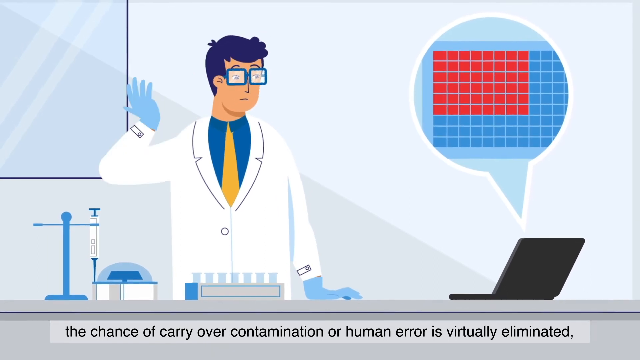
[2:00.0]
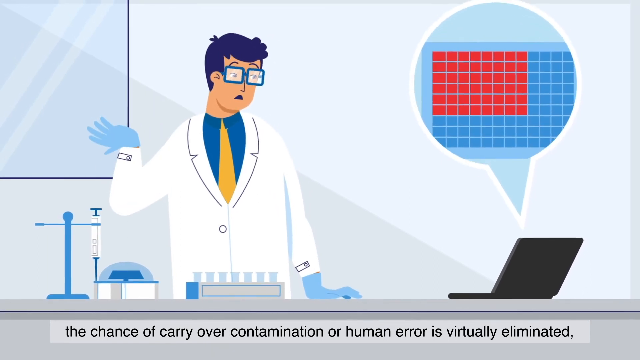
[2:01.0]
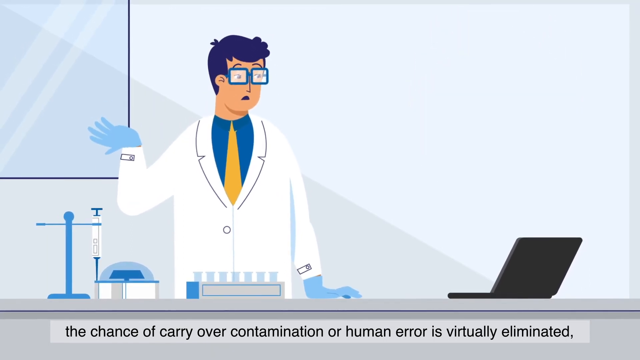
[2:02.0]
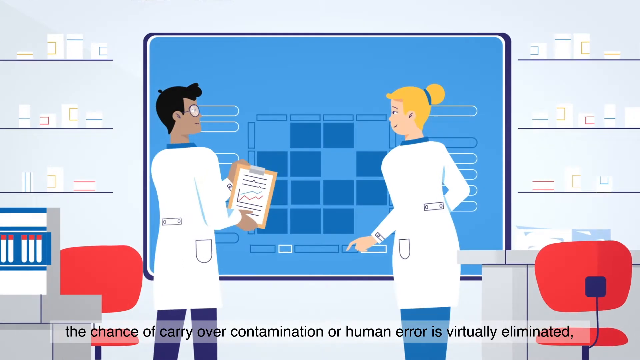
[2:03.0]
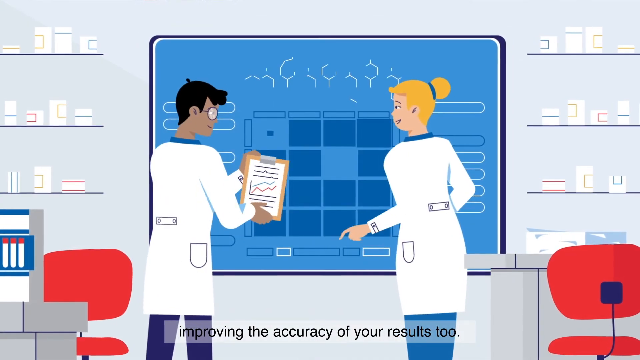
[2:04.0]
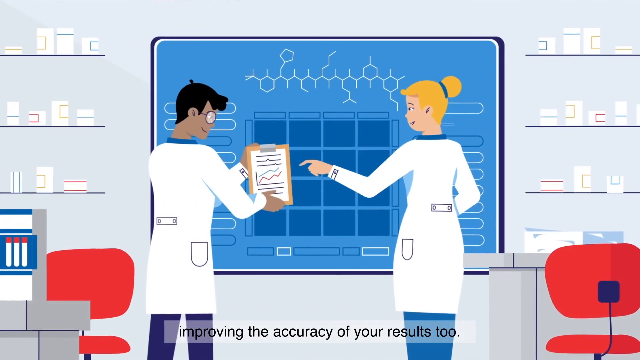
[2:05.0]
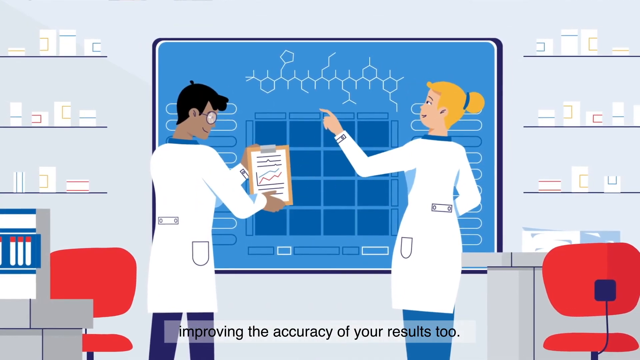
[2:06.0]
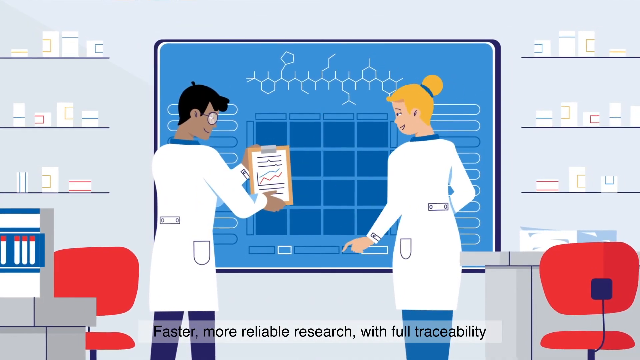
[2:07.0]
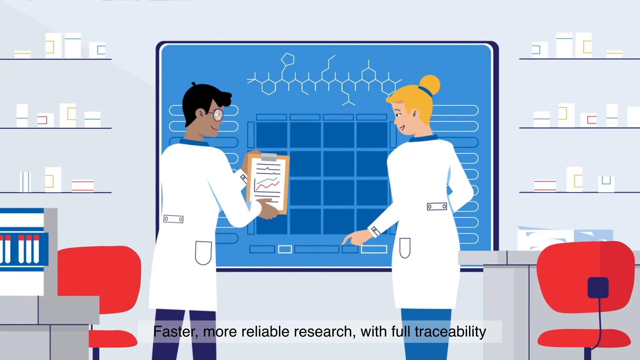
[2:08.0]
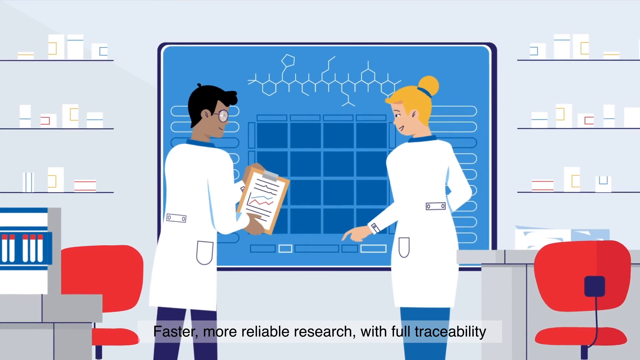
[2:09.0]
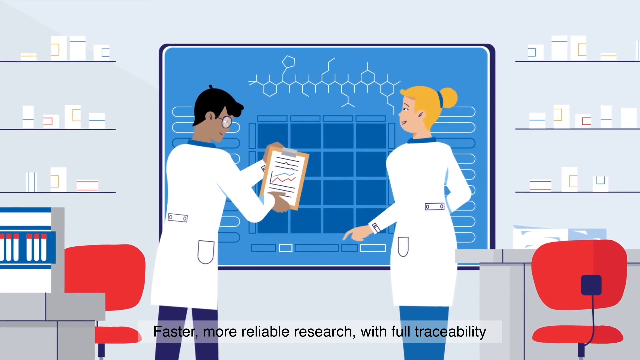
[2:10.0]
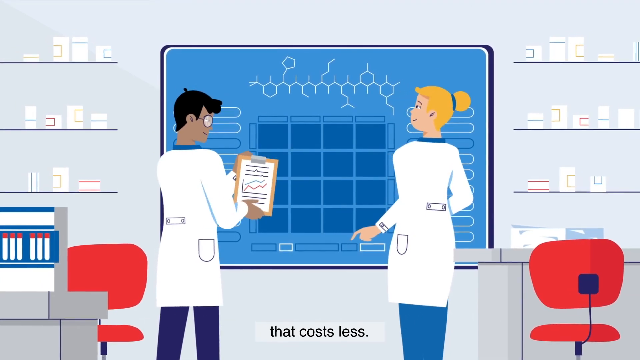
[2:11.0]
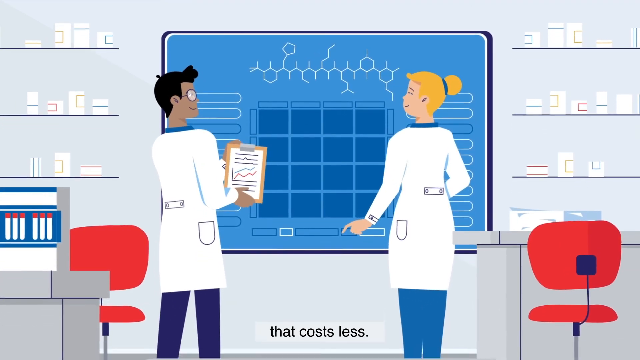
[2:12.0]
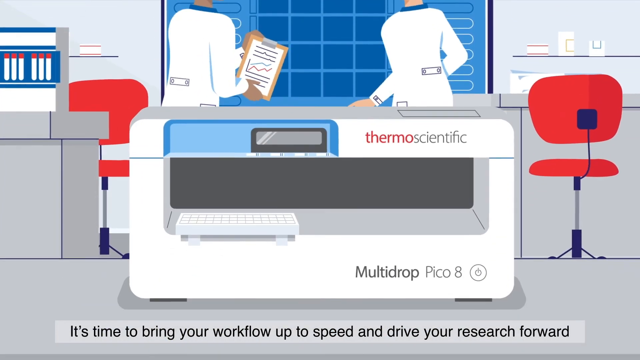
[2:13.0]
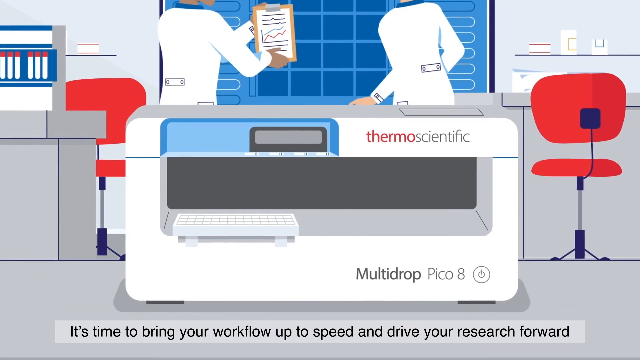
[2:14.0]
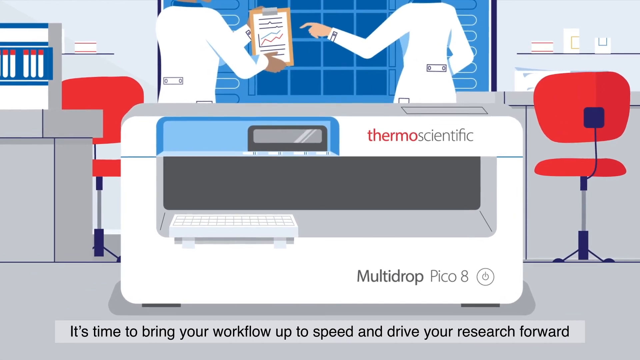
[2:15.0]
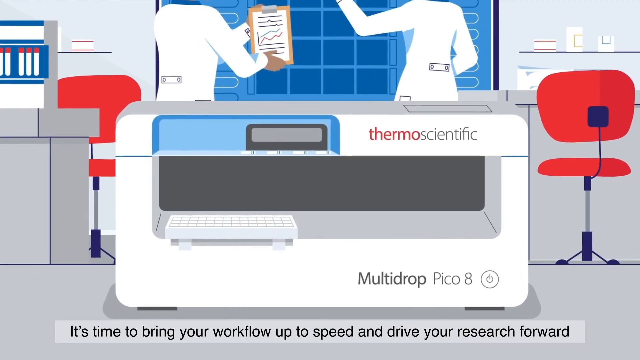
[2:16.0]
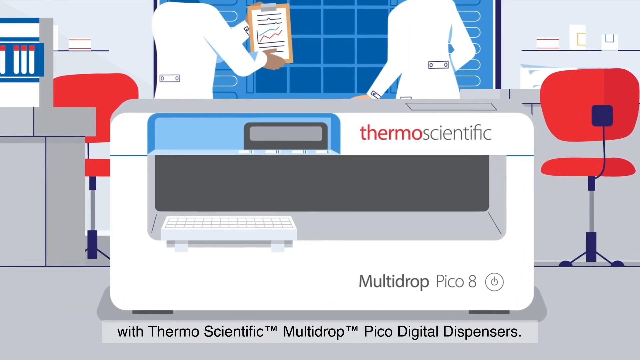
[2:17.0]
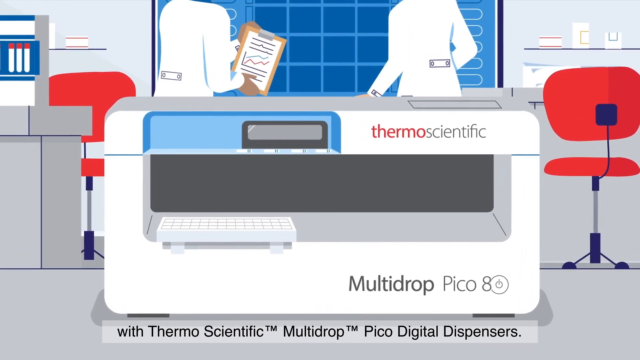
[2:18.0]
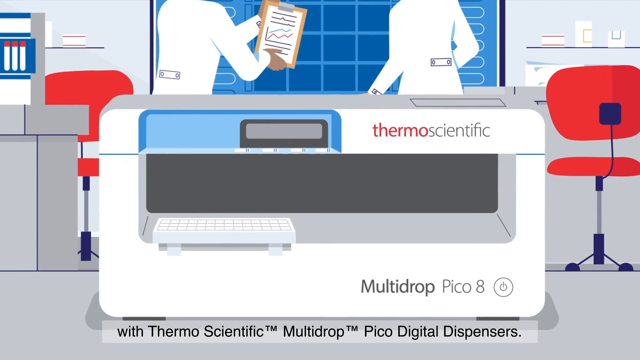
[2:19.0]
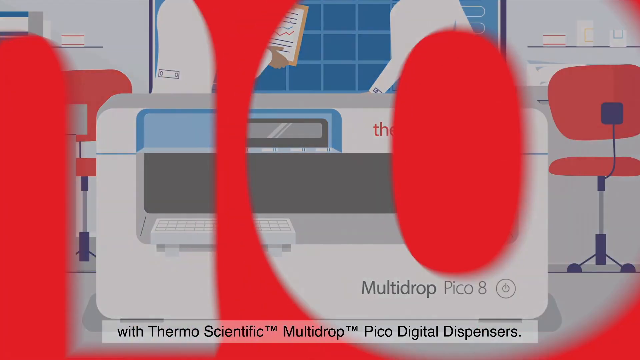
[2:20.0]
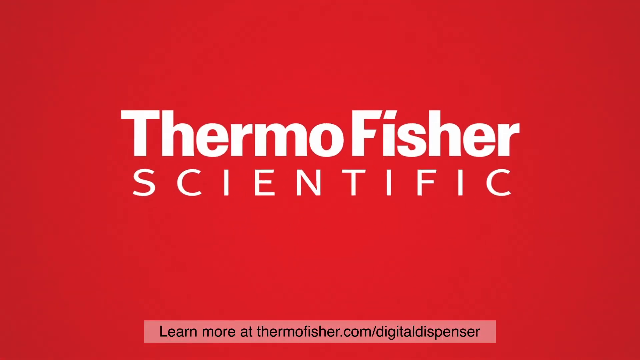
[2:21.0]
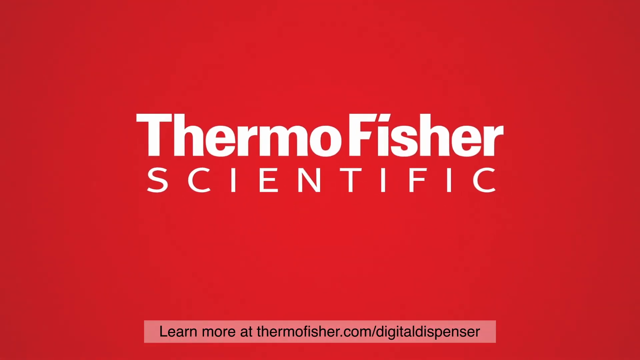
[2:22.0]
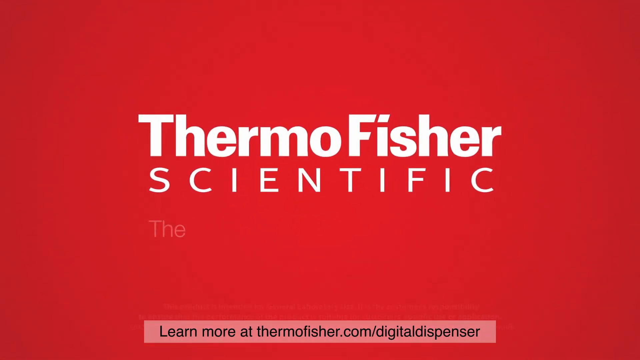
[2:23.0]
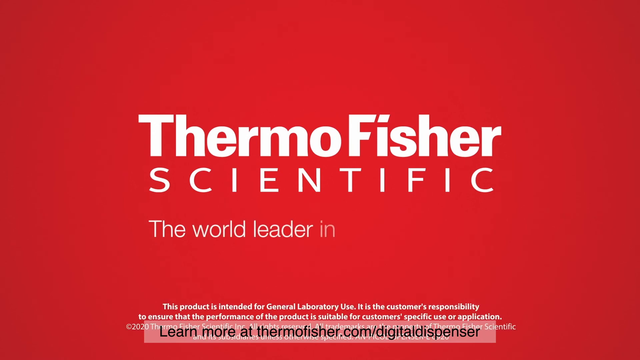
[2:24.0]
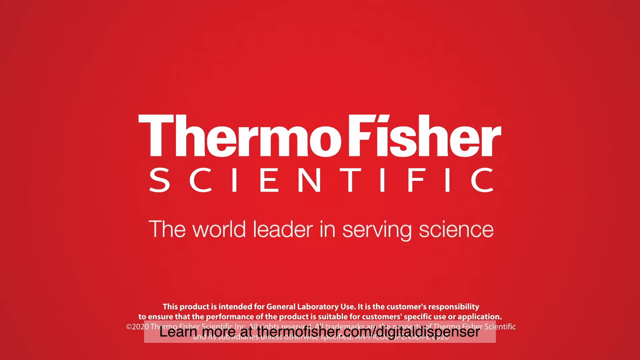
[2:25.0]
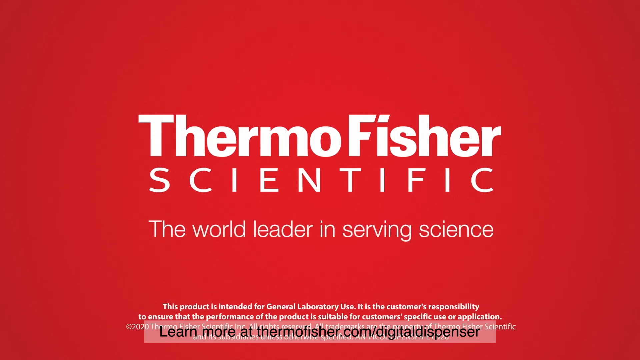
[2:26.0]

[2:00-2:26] A cartoon illustration shows a male with purplish hair and blue-framed glasses, wearing a lab coat, blue gloves, a darker blue shirt underneath the lab coat and a yellow tie. There is a mirror on the top left of the screen behind the man. In front of him is a gray table with a few items on it: on the far left what appears to be a needle nose syringe holder, some kind of other device right next to it, a syringe-looking holder next to that device, and a laptop-looking computer on the far right. At the bottom, black text reads "the chance of carryover contamination or human error is virtually eliminated". The screen switches to another scene of a male and a female looking at each other; the male has dark hair and the female has blonde hair.